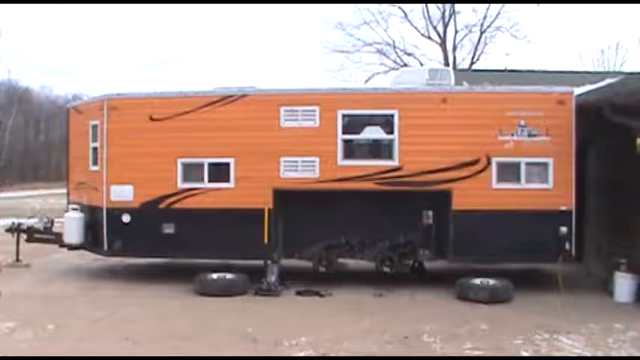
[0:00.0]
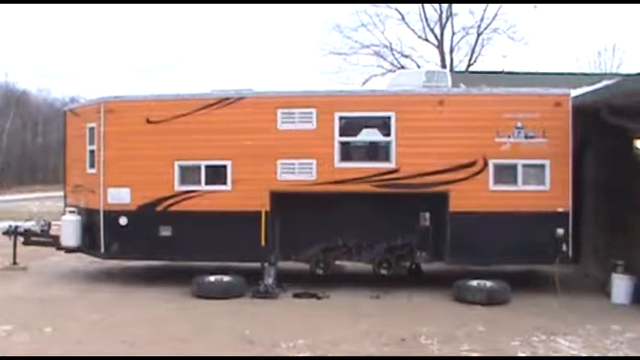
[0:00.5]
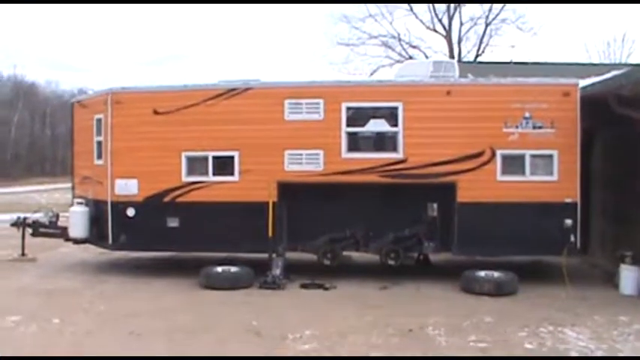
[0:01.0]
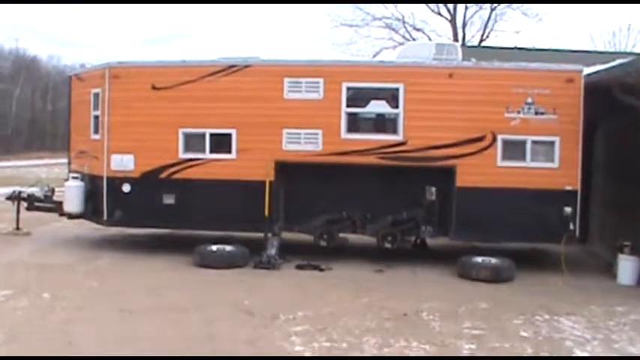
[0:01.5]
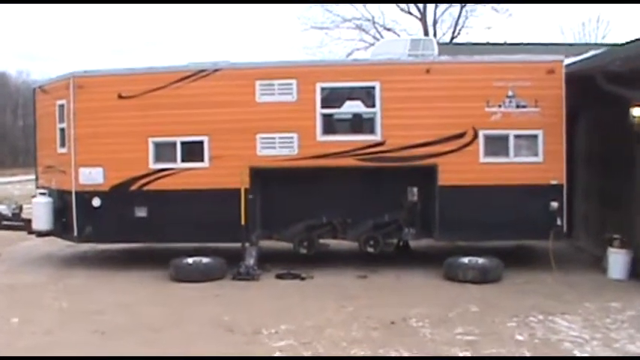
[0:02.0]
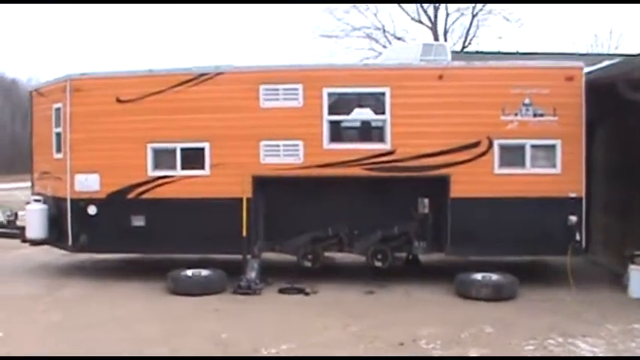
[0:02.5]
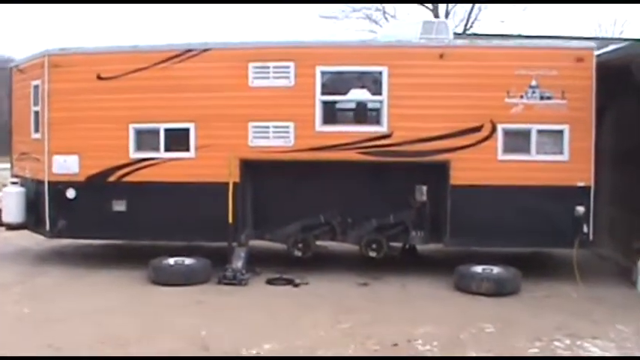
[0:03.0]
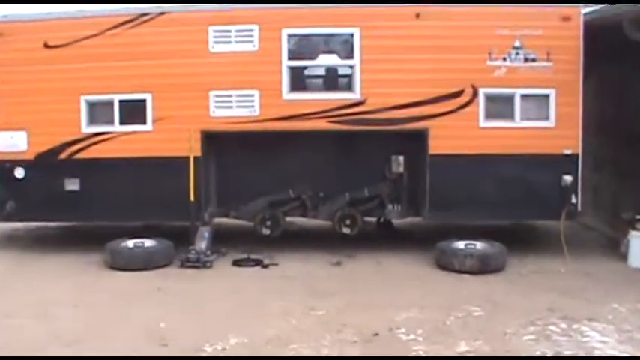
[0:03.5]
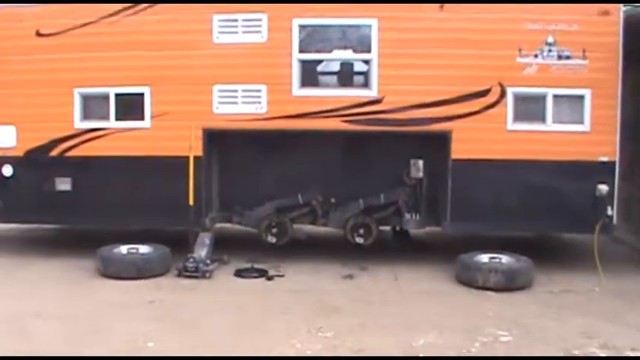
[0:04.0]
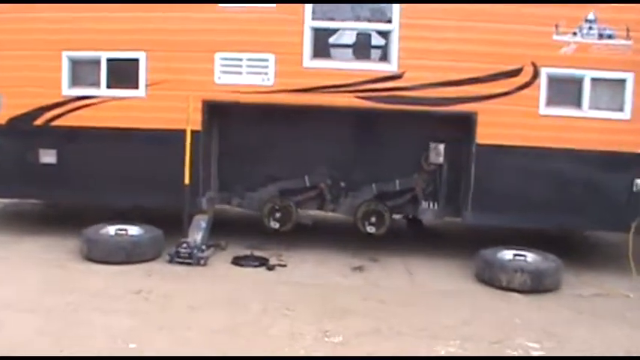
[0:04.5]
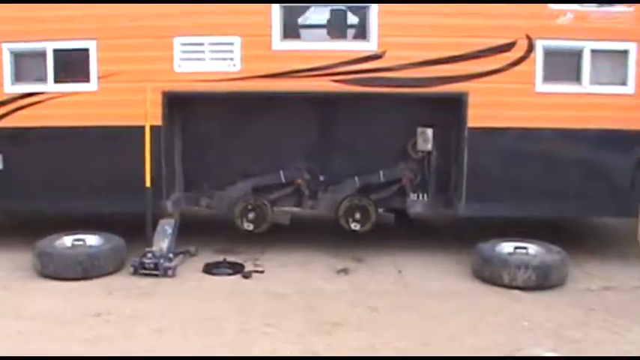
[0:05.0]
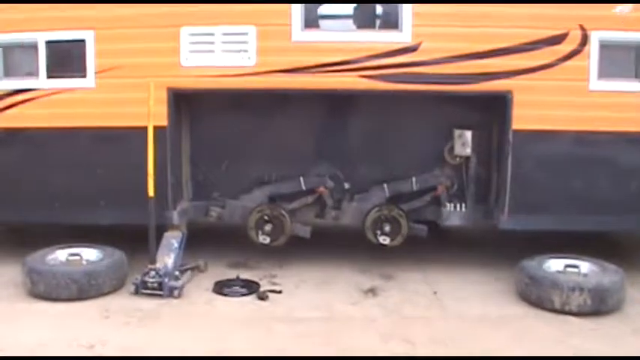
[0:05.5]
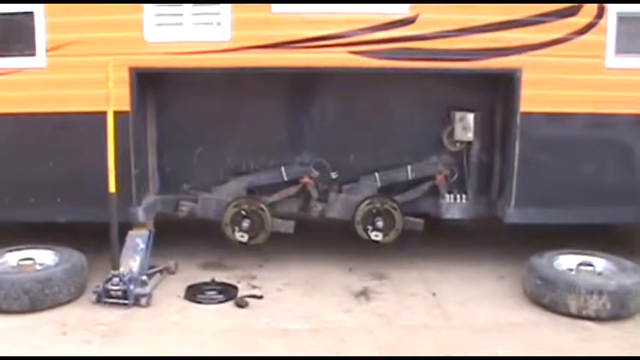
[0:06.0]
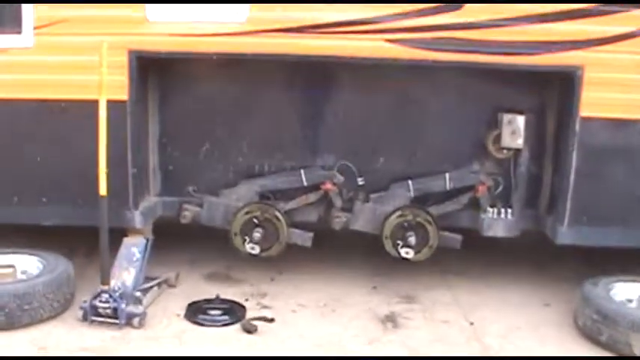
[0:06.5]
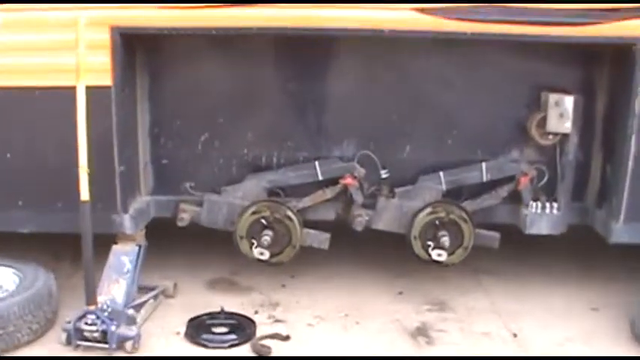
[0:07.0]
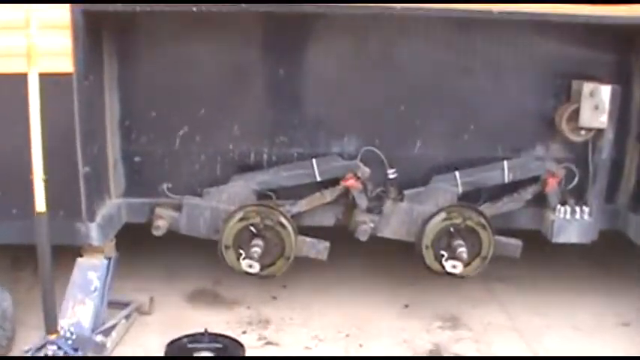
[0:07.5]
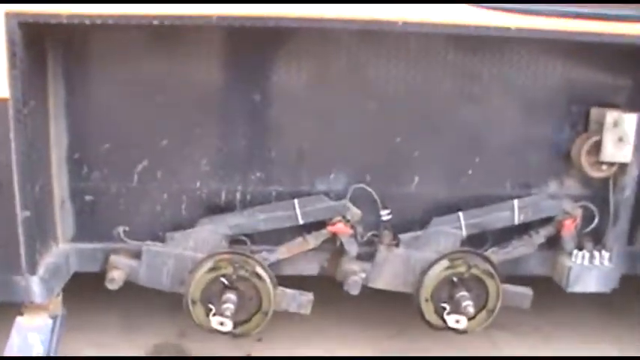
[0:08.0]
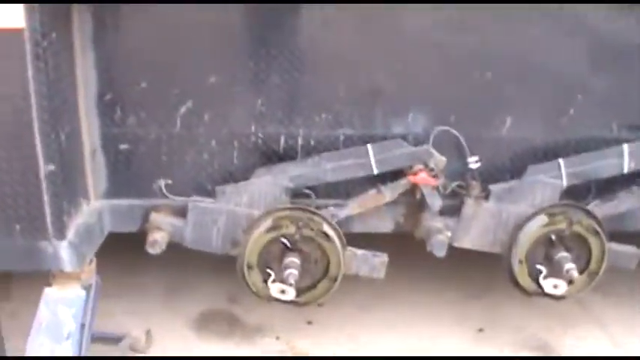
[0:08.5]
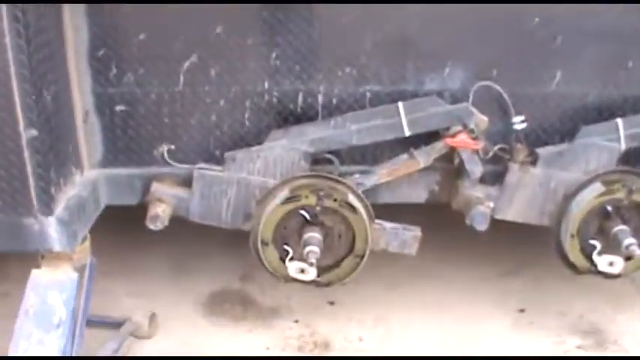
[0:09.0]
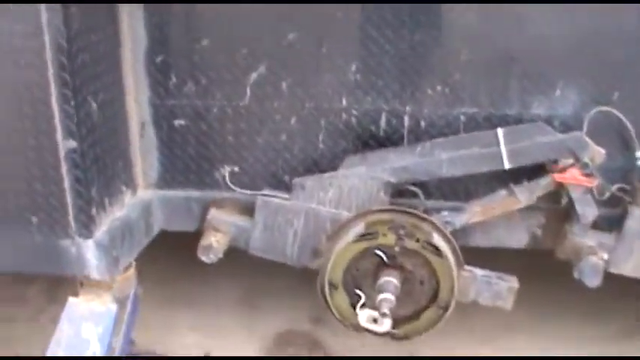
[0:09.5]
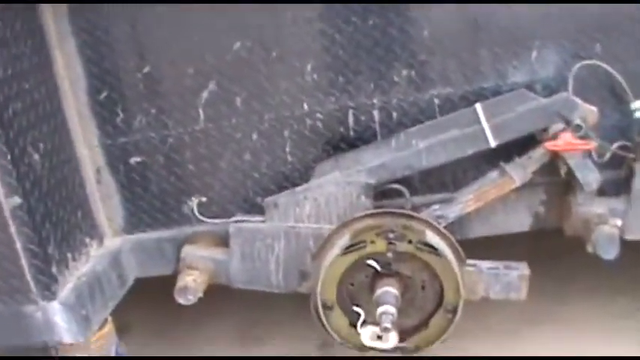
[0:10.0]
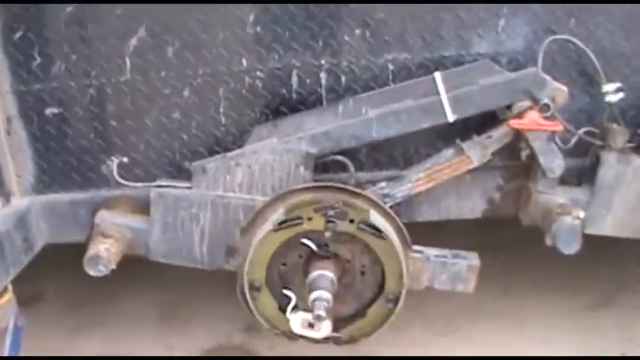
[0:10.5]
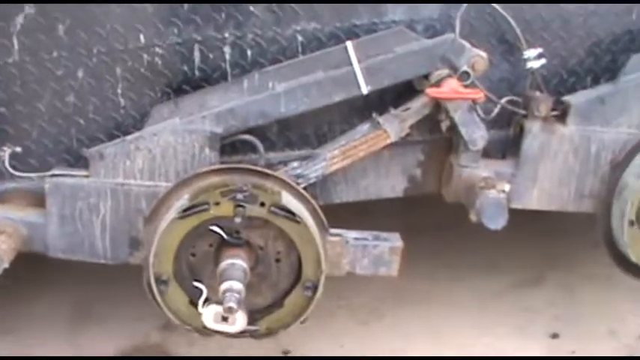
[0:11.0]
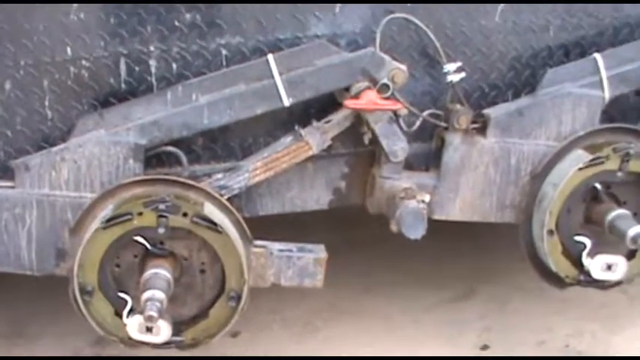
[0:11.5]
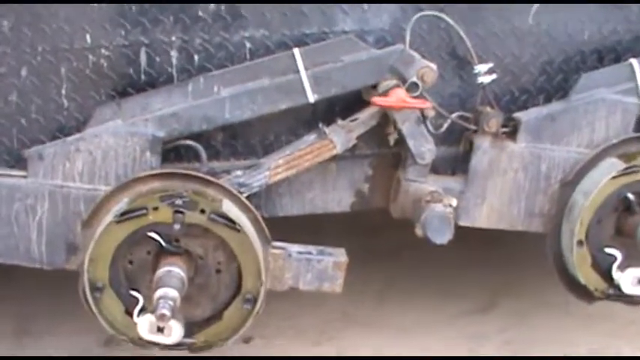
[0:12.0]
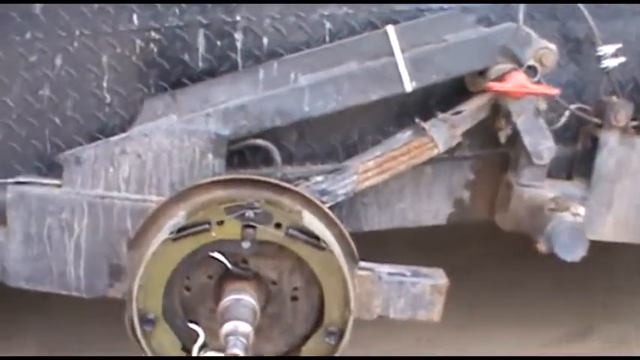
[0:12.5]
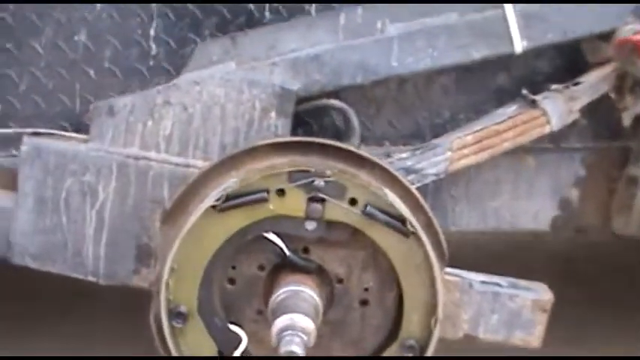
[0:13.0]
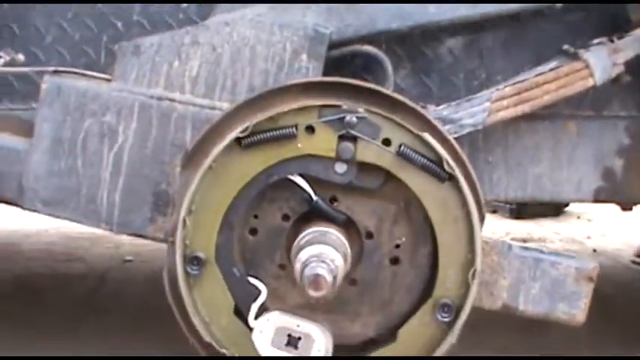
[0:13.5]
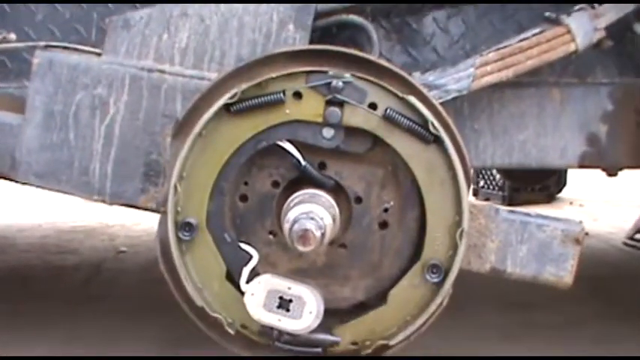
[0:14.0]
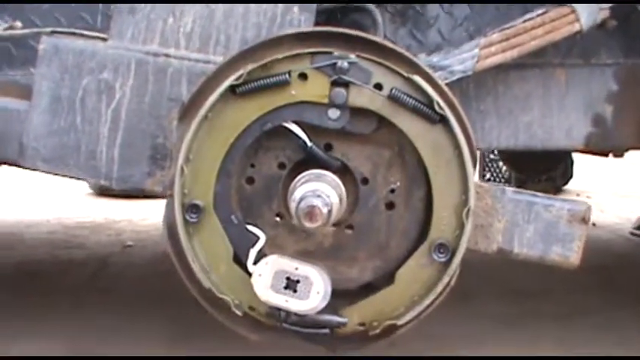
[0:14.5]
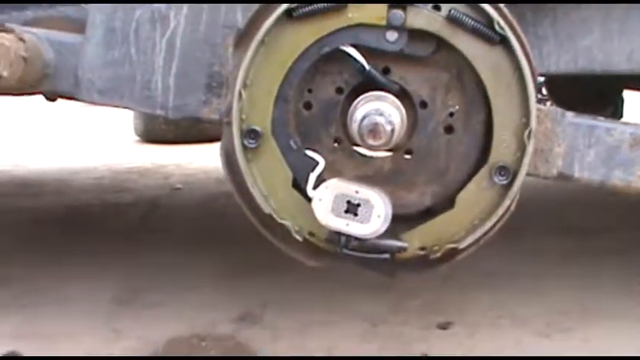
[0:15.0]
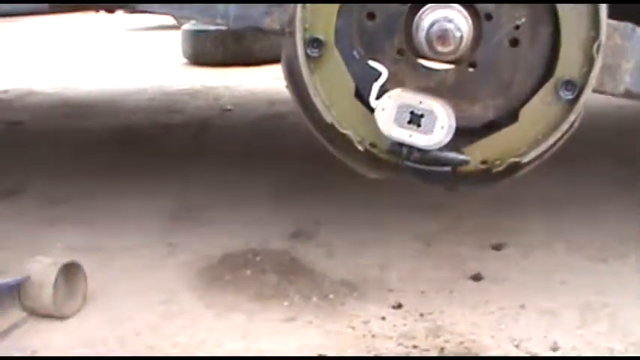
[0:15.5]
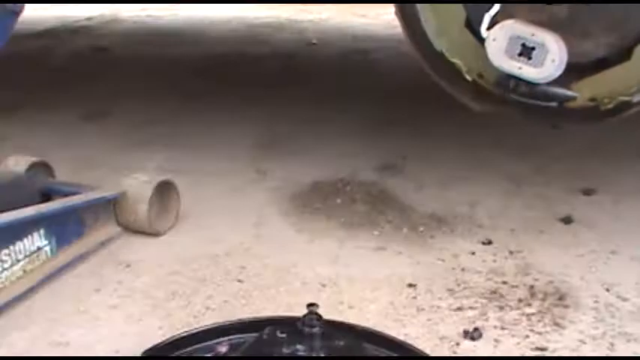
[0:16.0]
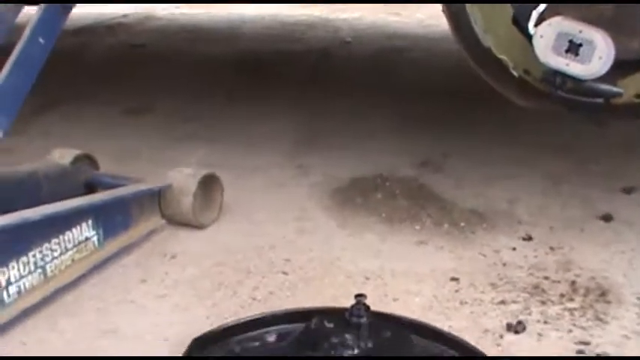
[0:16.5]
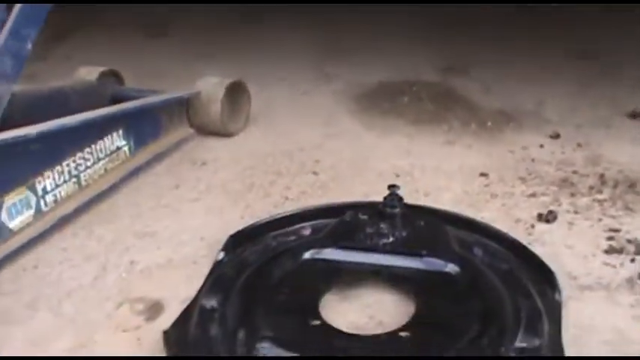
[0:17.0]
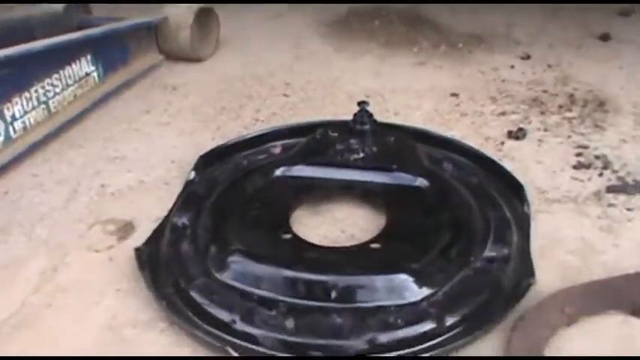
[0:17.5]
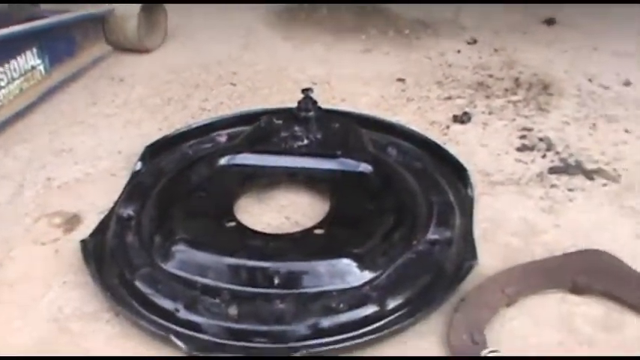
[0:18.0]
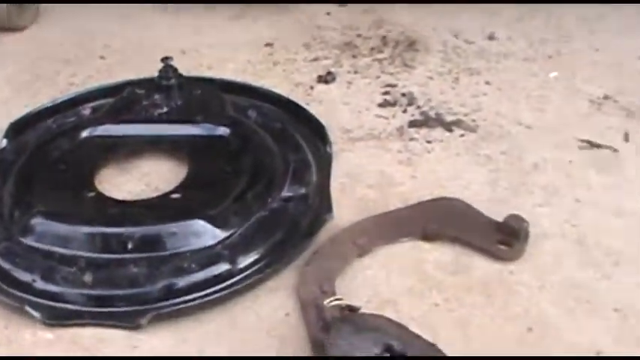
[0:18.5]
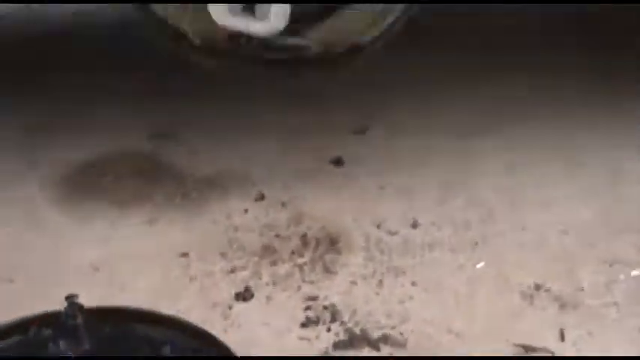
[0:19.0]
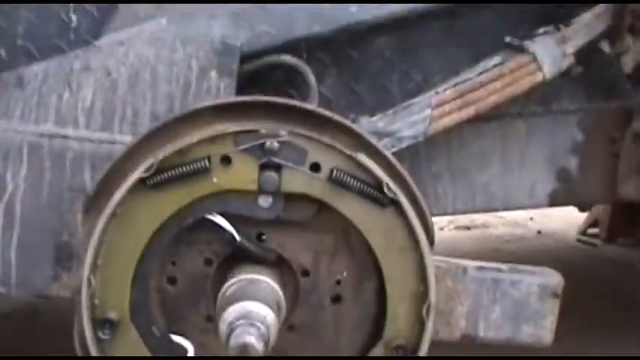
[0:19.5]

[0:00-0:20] The video starts outside under a kind of wintry-looking blue sky, with a tree coming up from the middle above a camper. To the left, a little bit of trees and snow are visible. On the left side, where the hitch is, there is the brace that comes down, the jack for it, and a propane tank. The top two-thirds of the camper's side facing the camera, and a little of its left side, is orange, and the bottom portion is black, with a couple of black stripes. There is a window on the left side, small windows on the left and right sides at the front, a bigger one in the middle with two ventilations to its left, and a big ventilation up to the right. The wheels are off, laying flat on the ground in front of it. The person holding the camera slowly starts walking toward it. In the middle, where the two wheels go, there is a big square space cut out with two round spots where the tires go. A jack is underneath the left side of the open space with a tire to its left, and the other tire is on the right side. As the camera slowly moves in, the brake pads come into view. It goes to the left one first: silver with bolts sticking out of it, hydraulics behind it, and metal plates. The camera goes down a little to show the front end where it screws in, down to a casing that goes over it. A couple of pieces that look like brakes are laying on the ground.